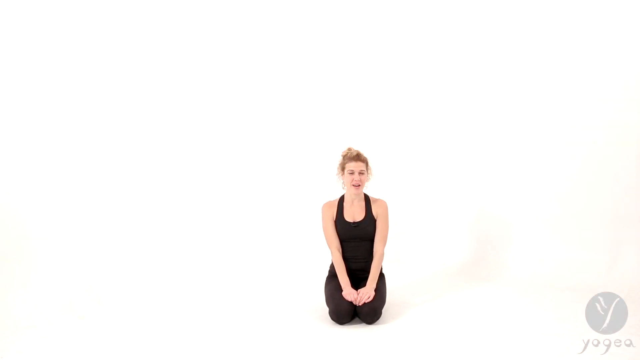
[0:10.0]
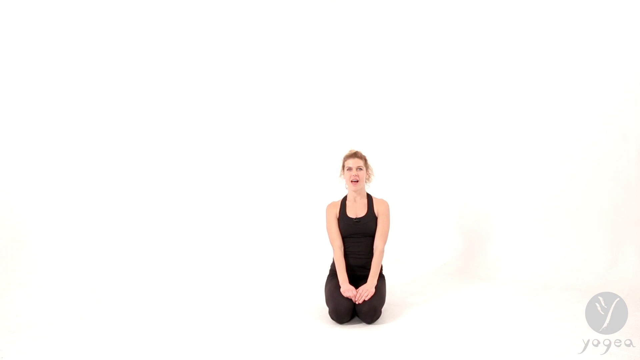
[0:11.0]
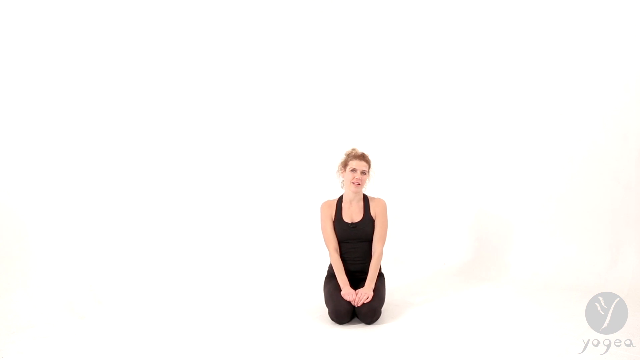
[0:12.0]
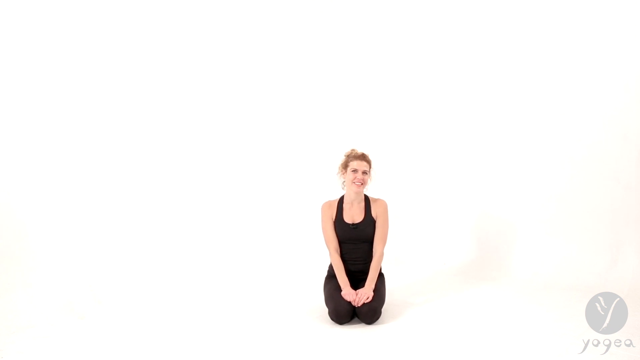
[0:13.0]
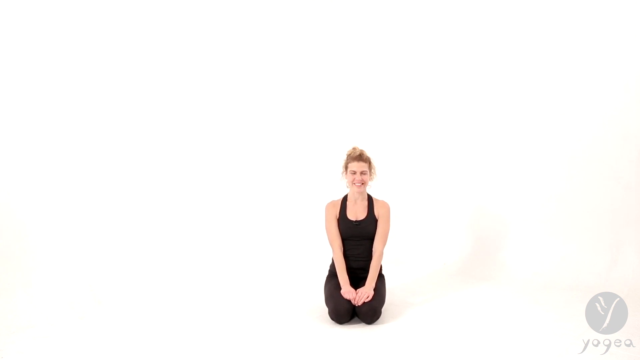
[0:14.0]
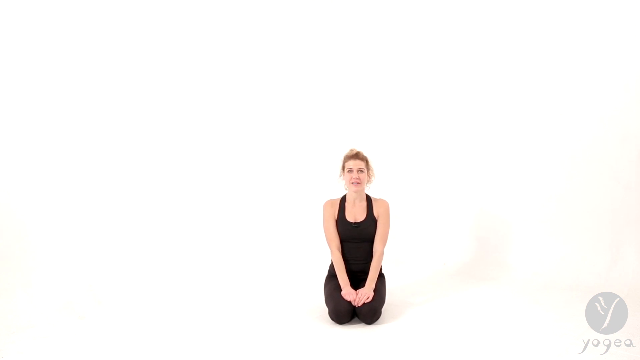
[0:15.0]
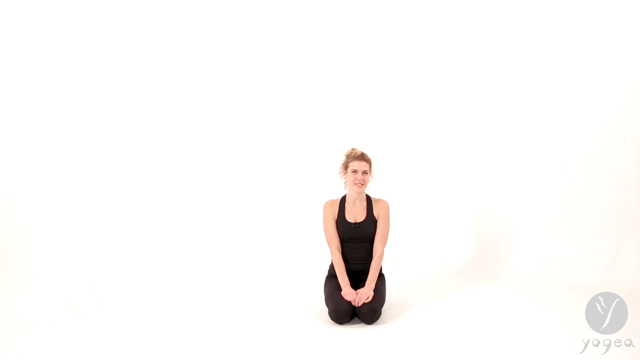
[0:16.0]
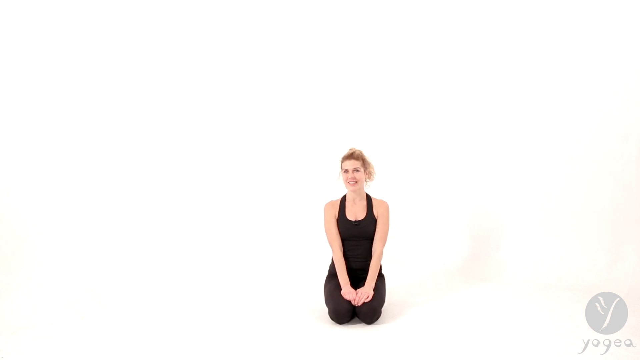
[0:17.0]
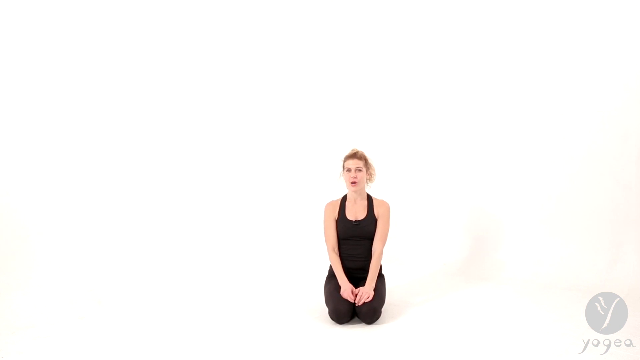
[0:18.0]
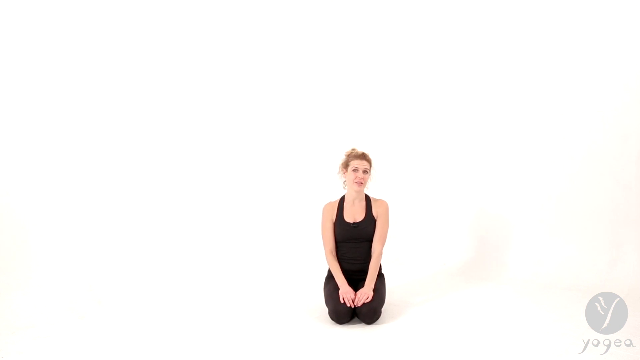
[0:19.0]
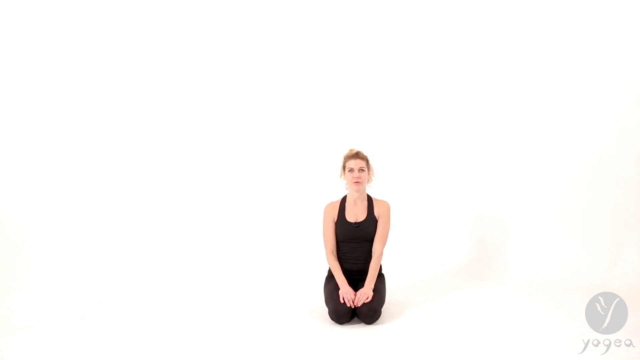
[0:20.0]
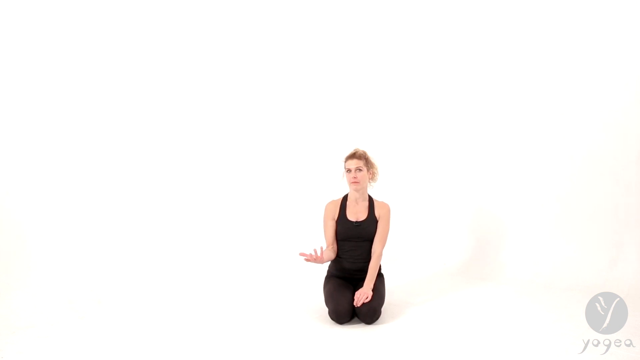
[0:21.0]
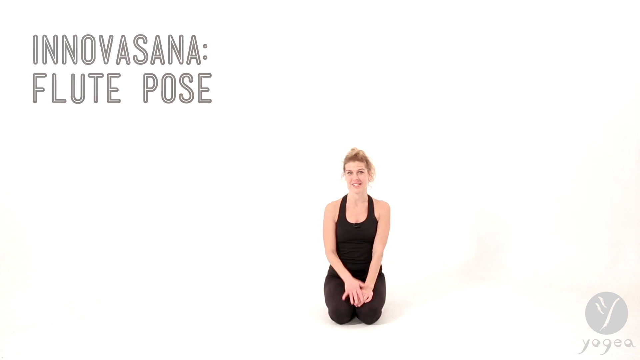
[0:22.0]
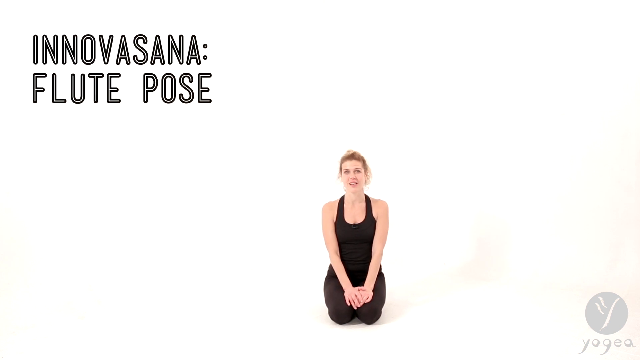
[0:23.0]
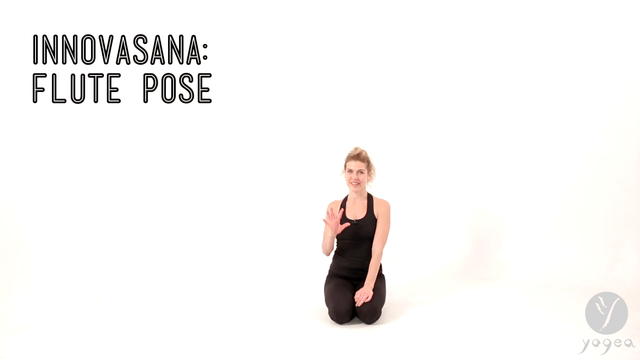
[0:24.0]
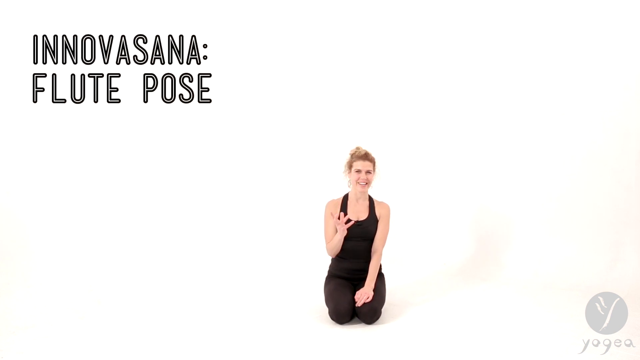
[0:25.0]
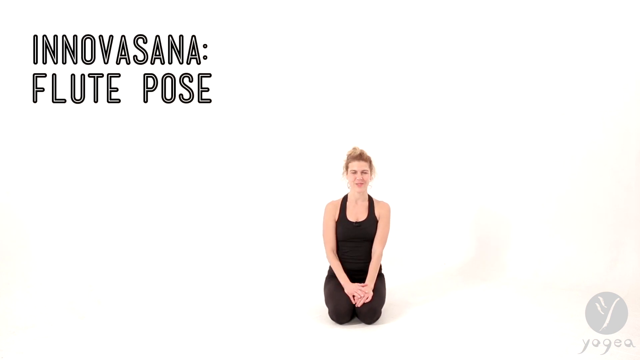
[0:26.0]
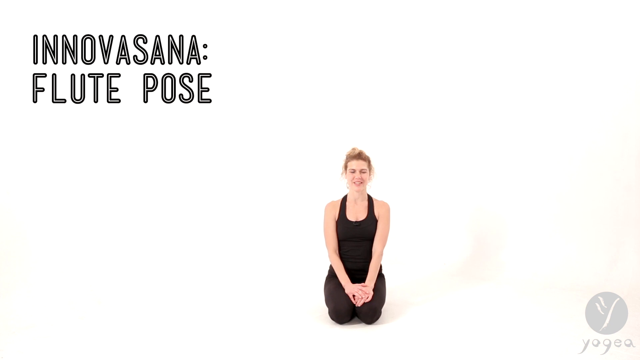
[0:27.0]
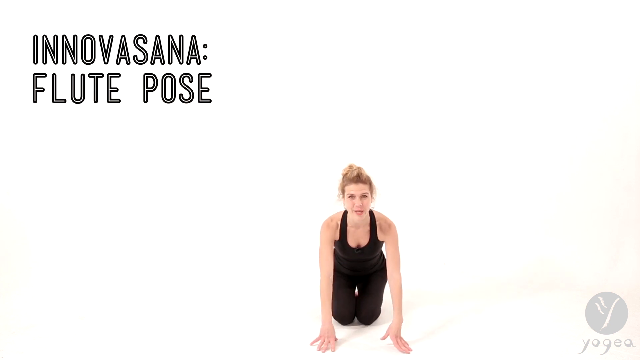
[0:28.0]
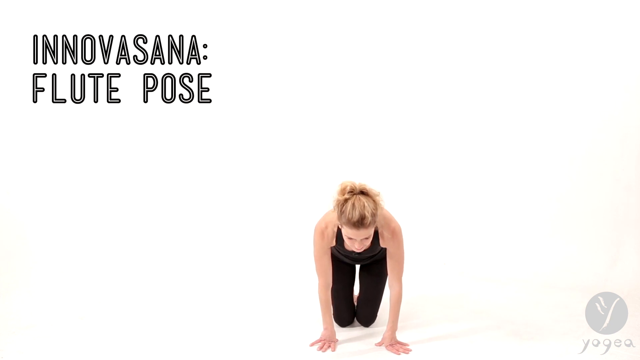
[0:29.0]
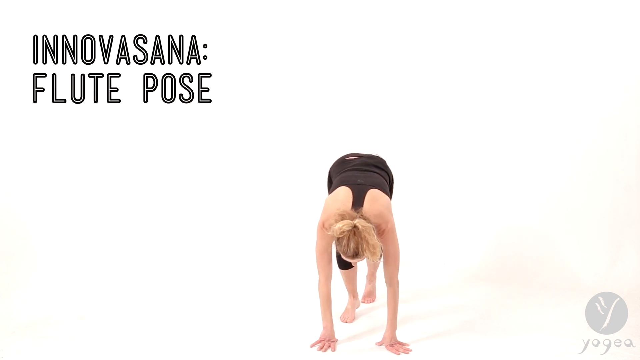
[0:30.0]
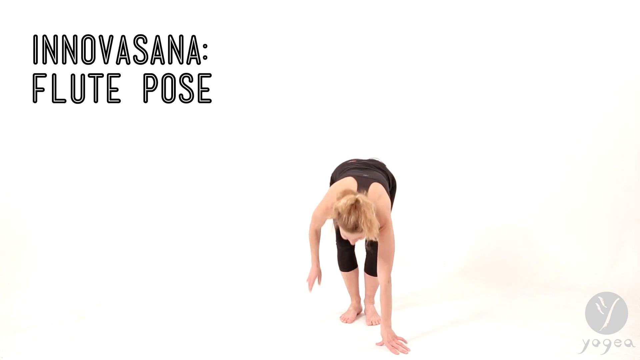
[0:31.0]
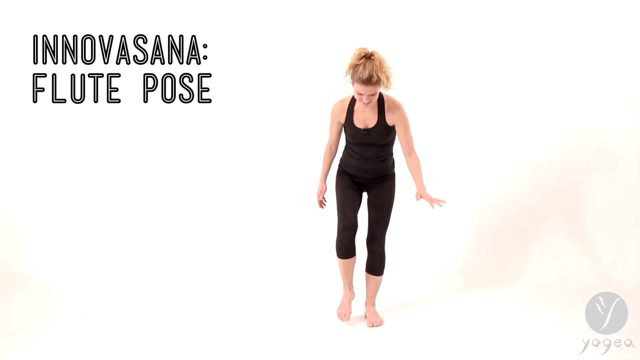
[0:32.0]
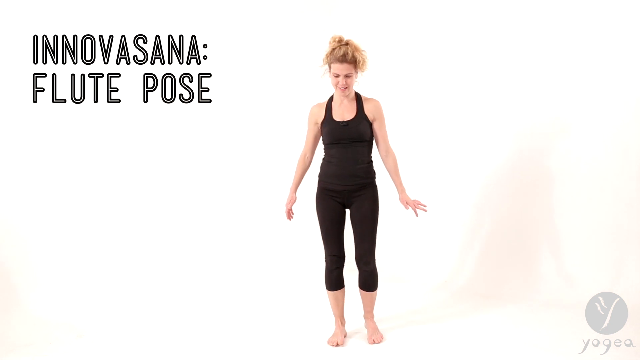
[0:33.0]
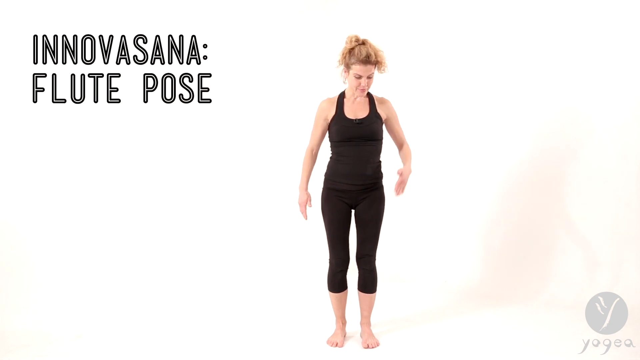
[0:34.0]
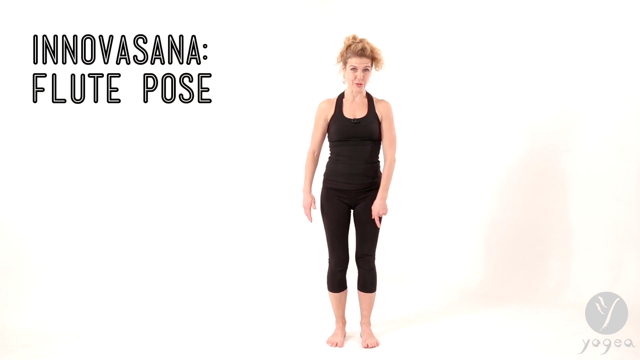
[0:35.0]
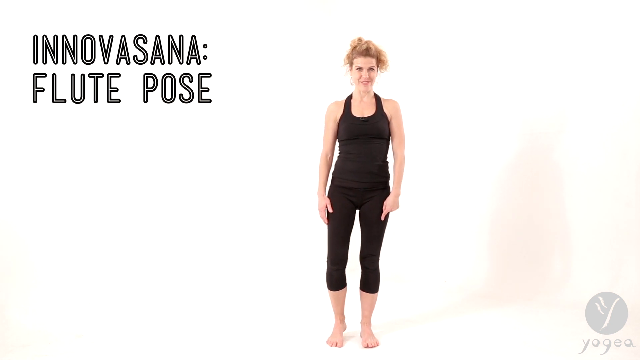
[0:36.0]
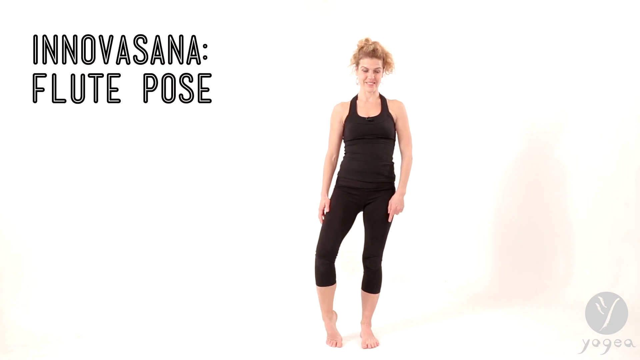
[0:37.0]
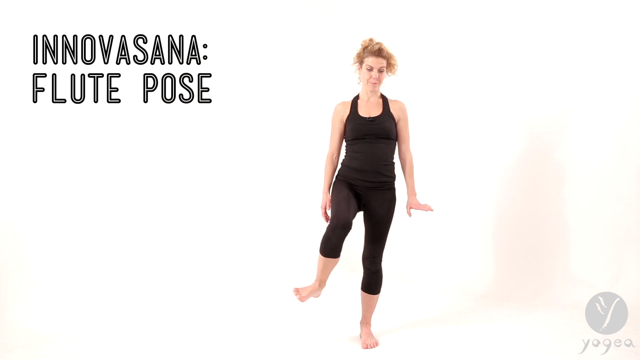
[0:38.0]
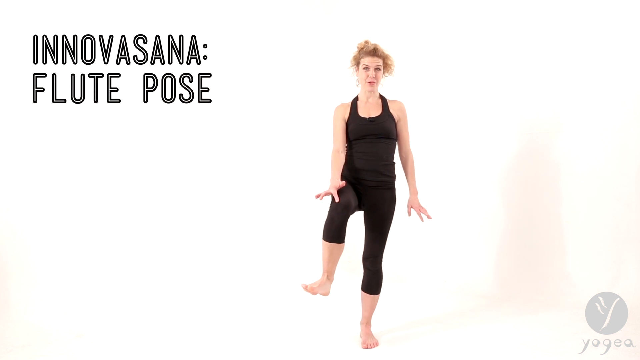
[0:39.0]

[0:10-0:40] A woman sits on the floor in a completely white studio, talking to the camera. She wears a black full-body leotard, and her blonde hair is pulled up into a bun on the top and back of her head. At one point she raises one hand into the air and moves her hands around expressively as she talks. She then puts both hands flat on the floor in front of her, raises the back of her body into the air while balancing the front of her body on her hands, and lifts her entire body off the ground into a standing position. Words in the upper left of the screen read "Innovasana flute pose". She then uses her hands to point down toward the floor and eventually lifts one leg off the floor.